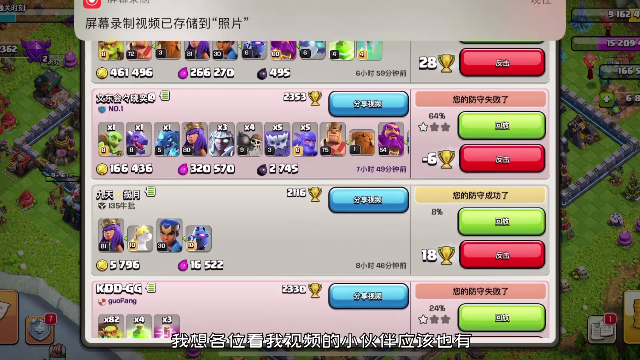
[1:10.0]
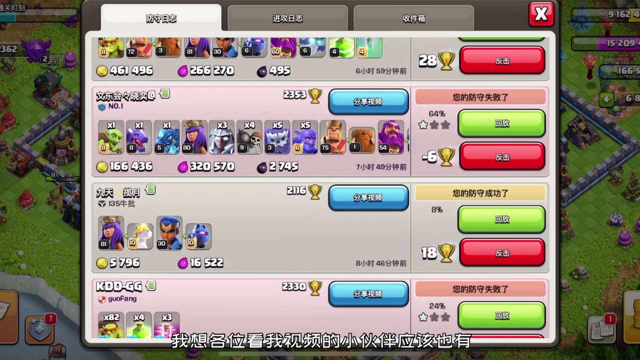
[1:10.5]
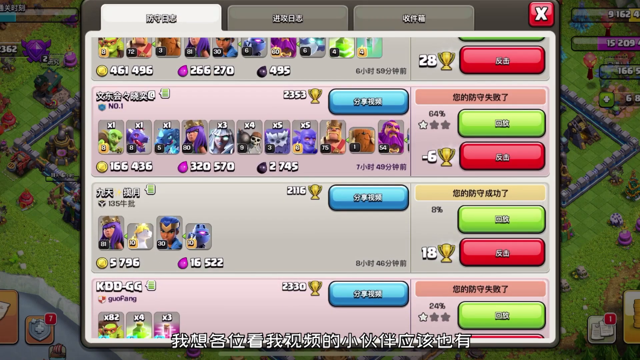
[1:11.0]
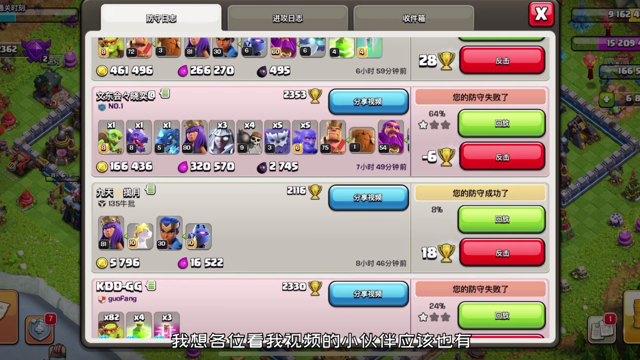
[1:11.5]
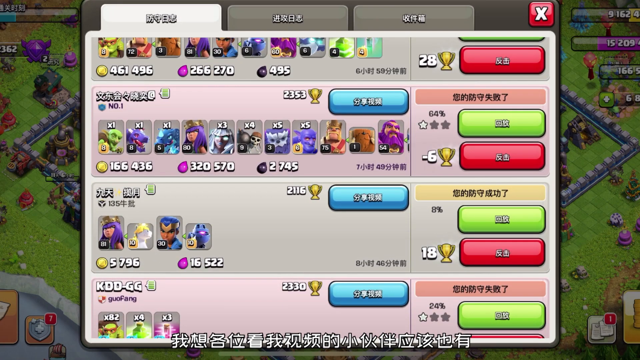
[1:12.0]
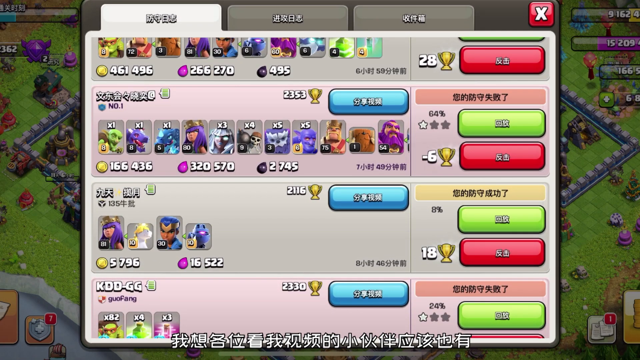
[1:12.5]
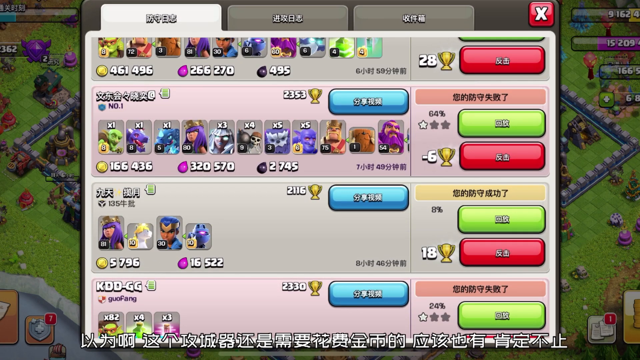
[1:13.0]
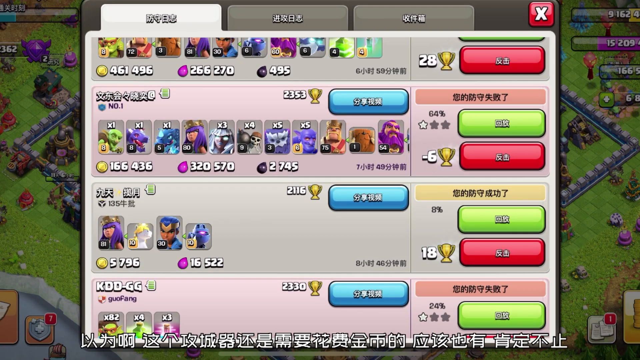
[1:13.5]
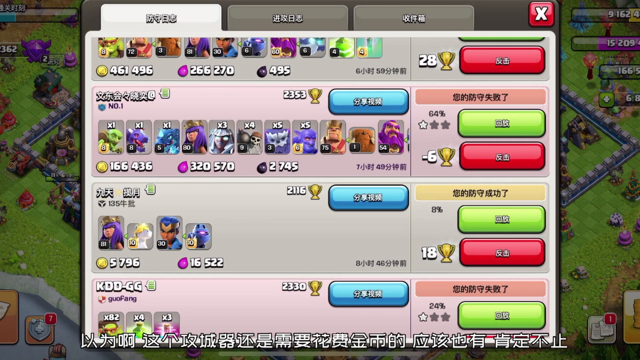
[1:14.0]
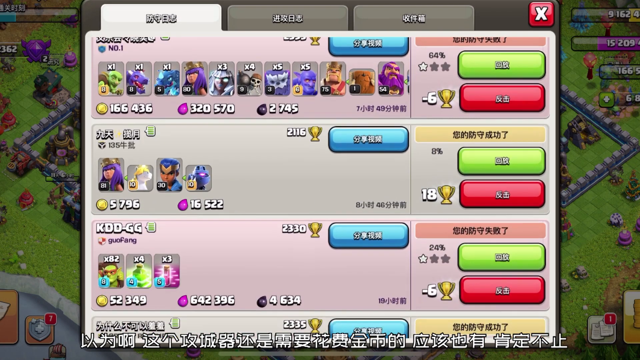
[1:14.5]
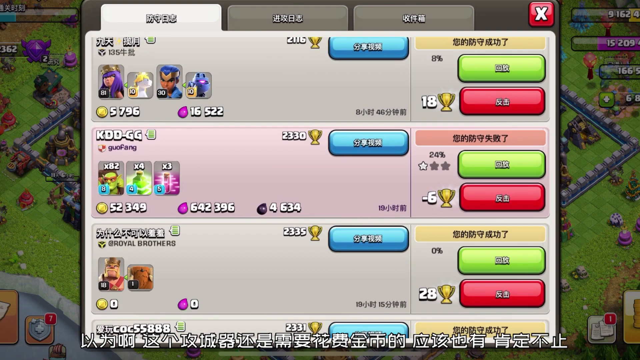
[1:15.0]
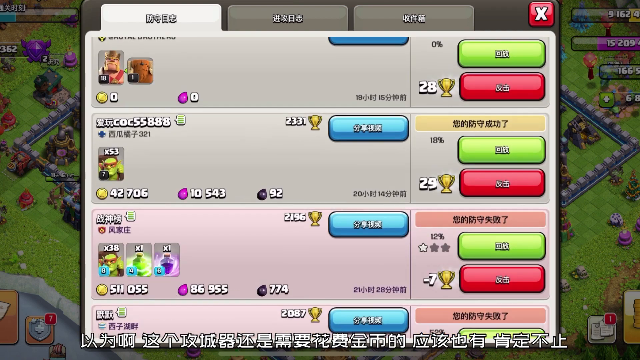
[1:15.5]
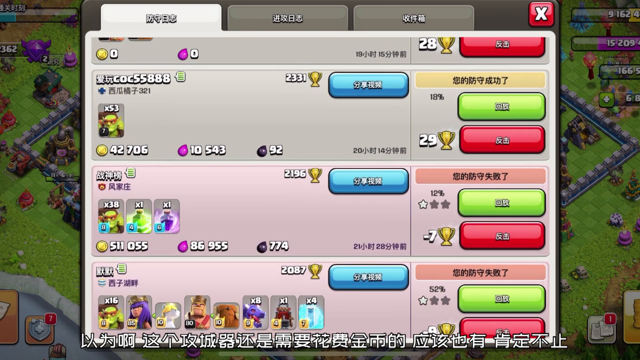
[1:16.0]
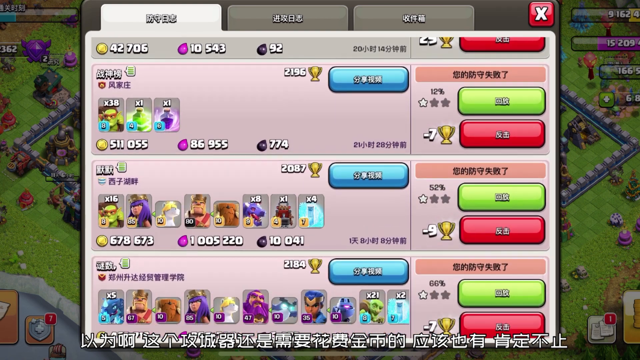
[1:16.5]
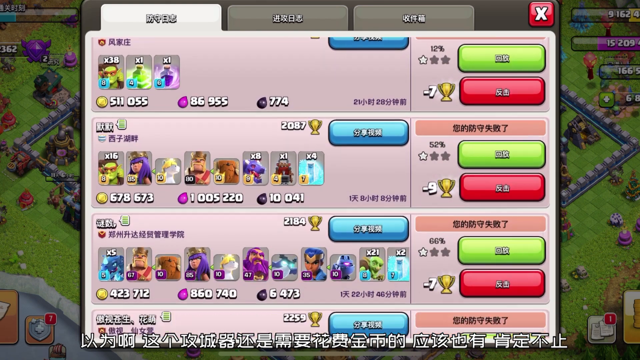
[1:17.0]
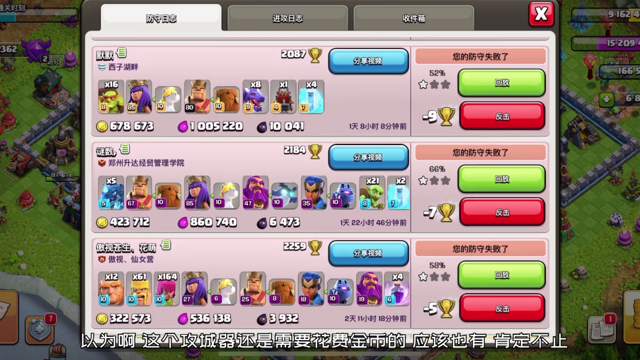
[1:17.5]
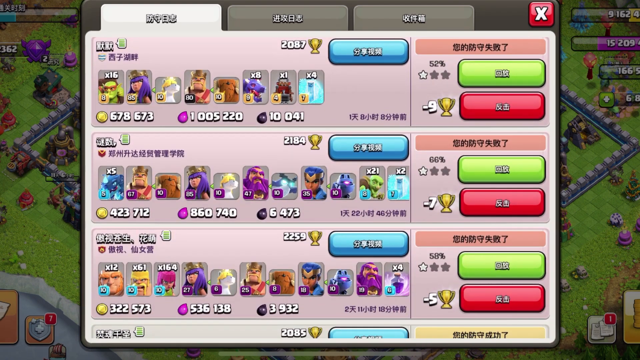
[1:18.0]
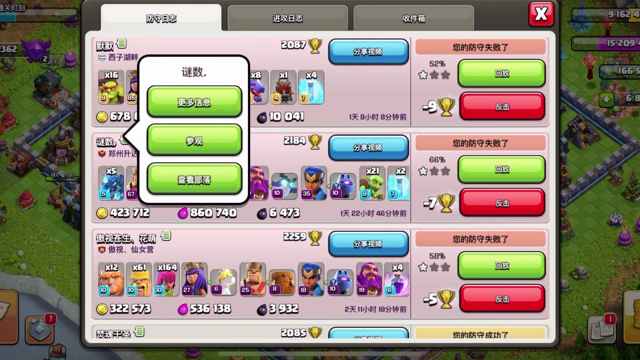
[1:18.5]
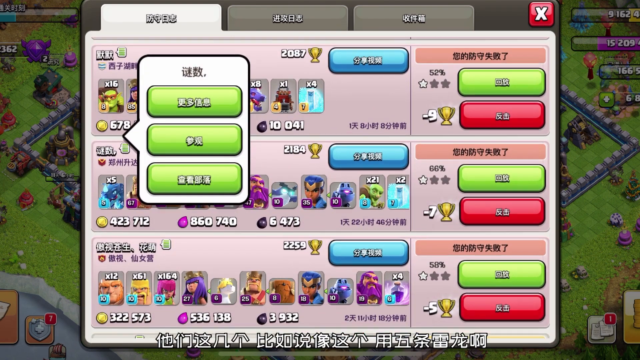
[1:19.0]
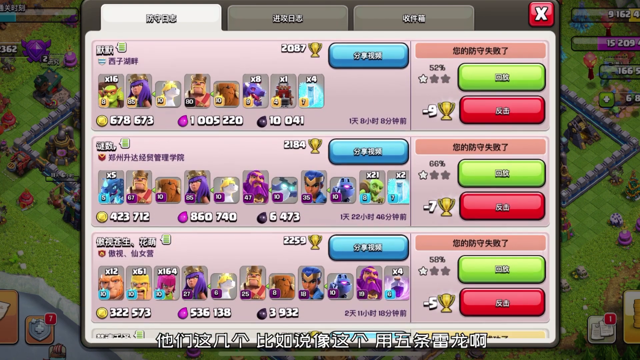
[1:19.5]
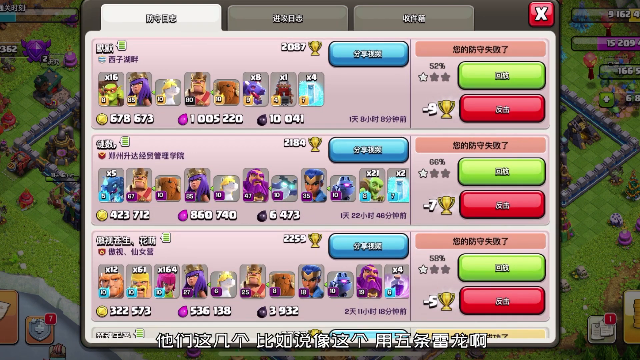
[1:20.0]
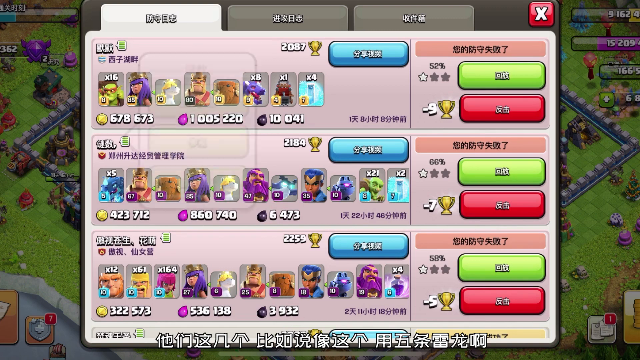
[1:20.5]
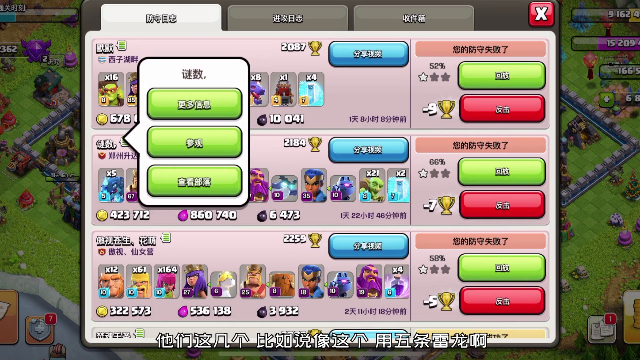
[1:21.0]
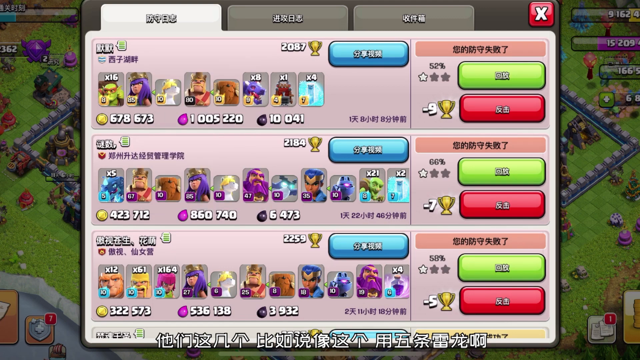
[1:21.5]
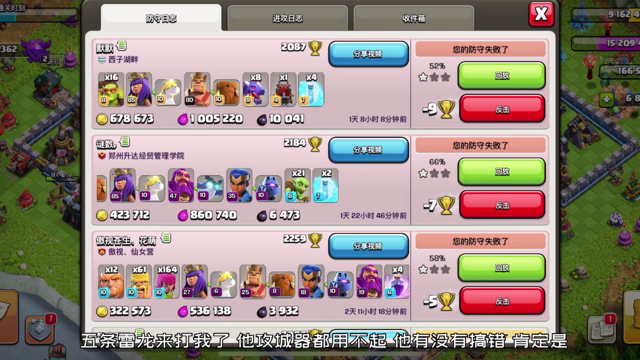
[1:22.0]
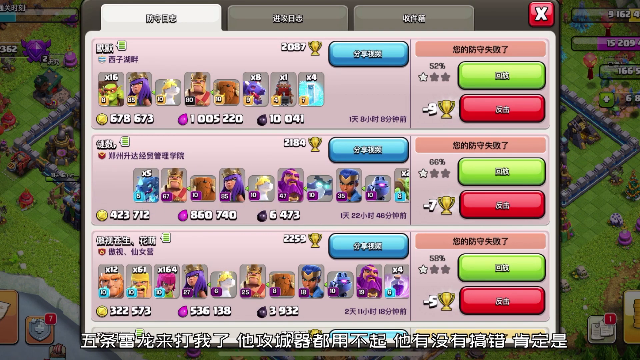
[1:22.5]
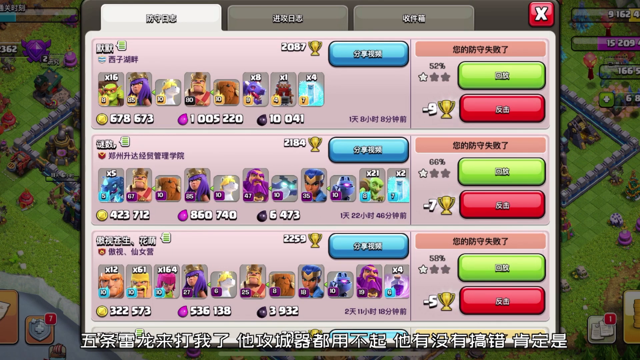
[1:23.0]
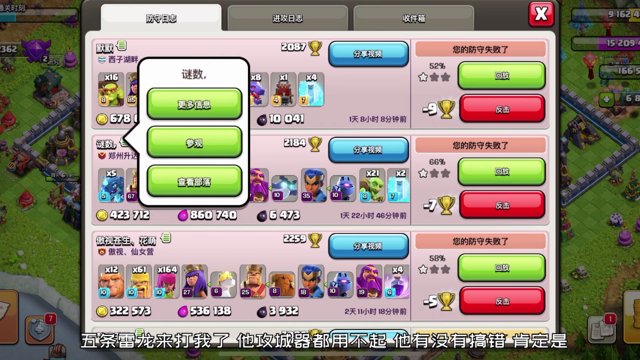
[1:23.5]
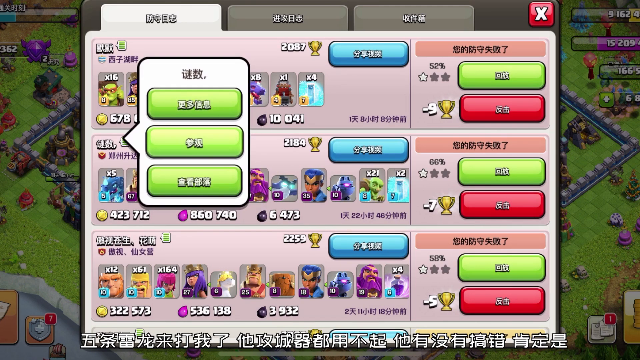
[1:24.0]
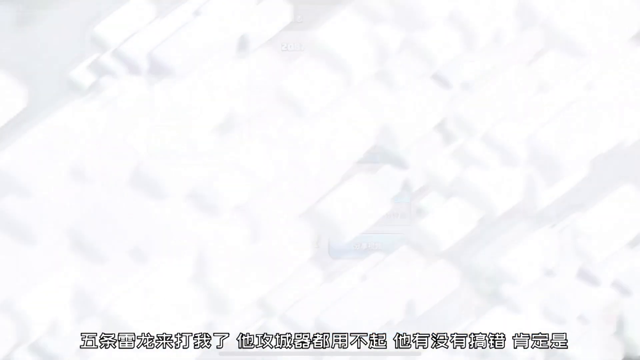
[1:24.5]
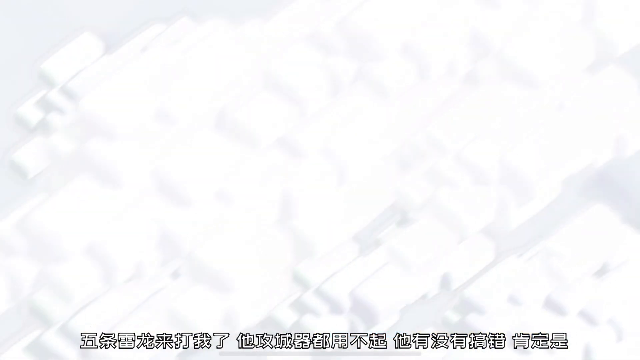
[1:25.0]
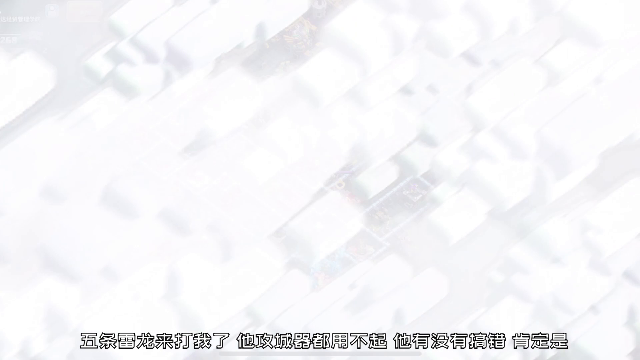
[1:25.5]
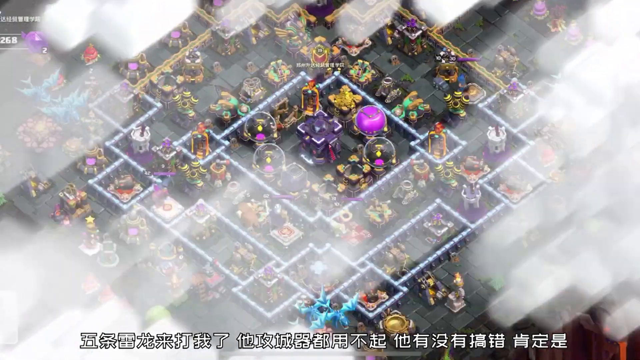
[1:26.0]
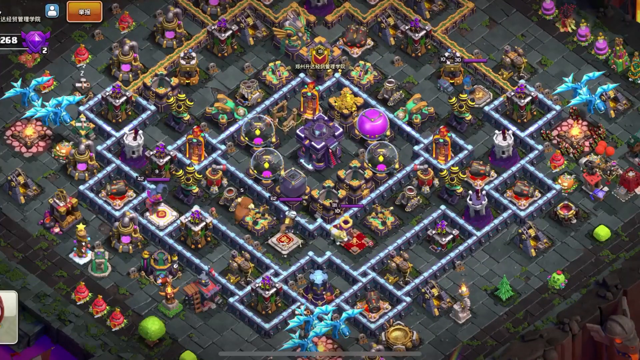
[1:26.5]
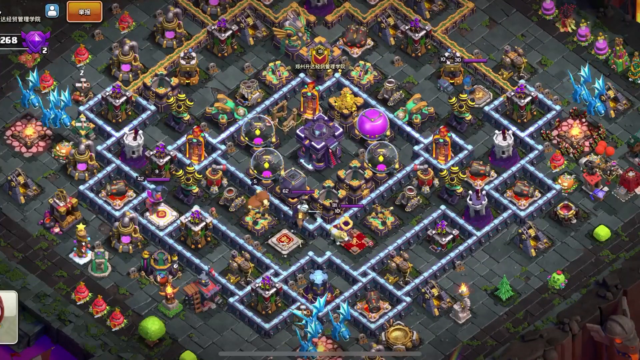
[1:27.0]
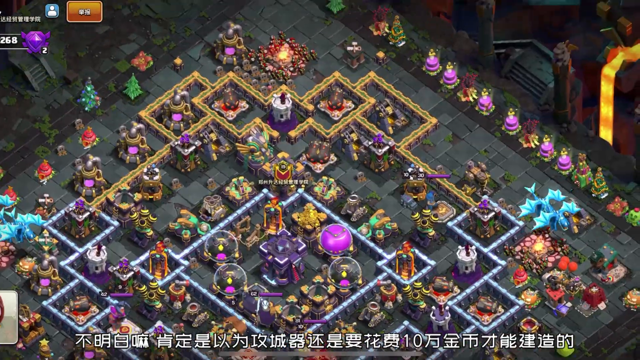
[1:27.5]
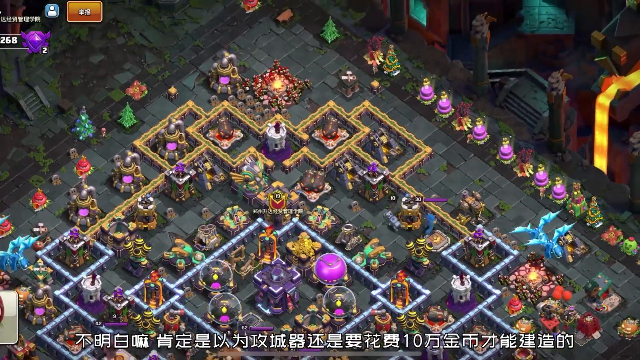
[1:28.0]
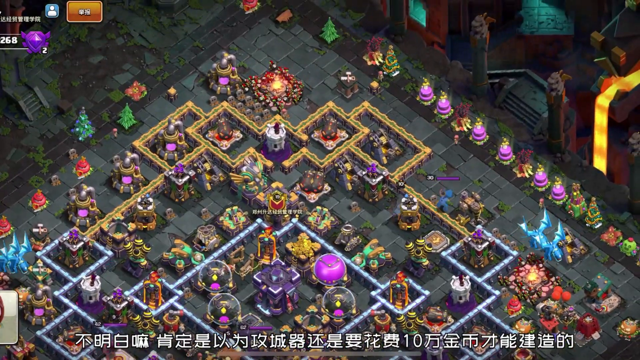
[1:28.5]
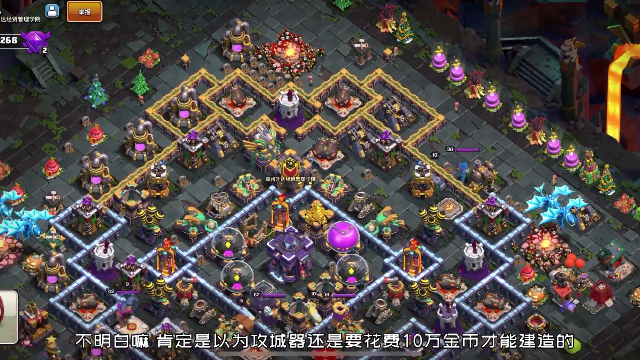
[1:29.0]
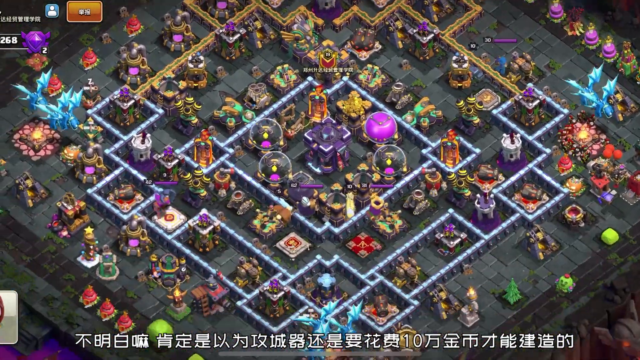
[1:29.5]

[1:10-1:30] A pop-up screen structured like the earlier ones appears: a rectangular box with three tabs in what looks like Chinese and a red X at the top right. The first row has four different symbols, which seem to be four different figures to pick from. Numbers at the bottom show the amount of coins and of what look like purple coins, along with a trophy and a blue button on the right; another section has a green and red button with trophy numbers. The second row has three boxes and the third row has two, so the rows go four, three and two. The panel keeps scrolling down, showing more options and more speech bubbles, and also scrolls from left to right through different figures and rows of objects and symbols. Then an aerial view of the game appears, chaotic and colorful, with many figures, light purple and bright purple, red objects, blue things that seem to be dragons or wings, and green trees. Near the end the same panel comes up again.